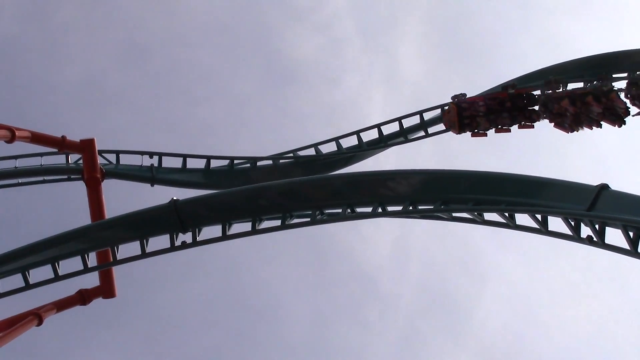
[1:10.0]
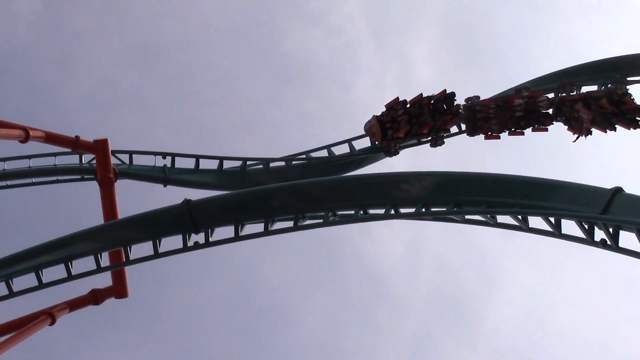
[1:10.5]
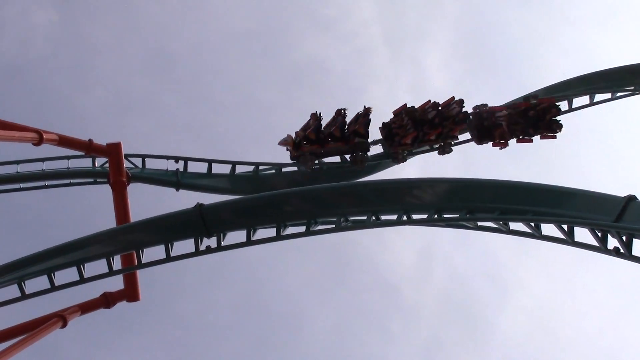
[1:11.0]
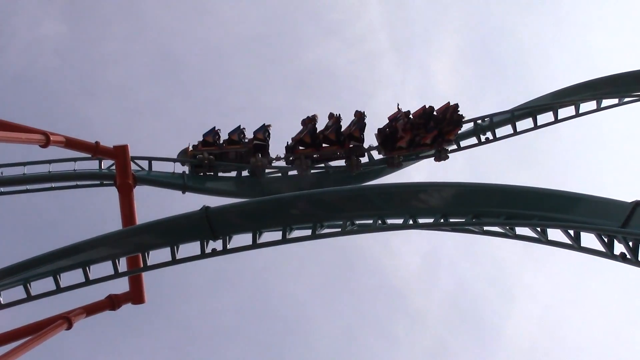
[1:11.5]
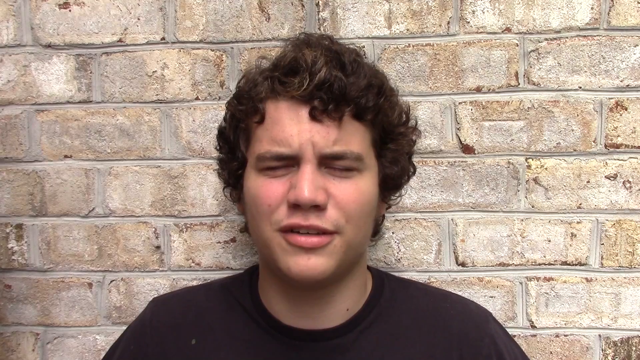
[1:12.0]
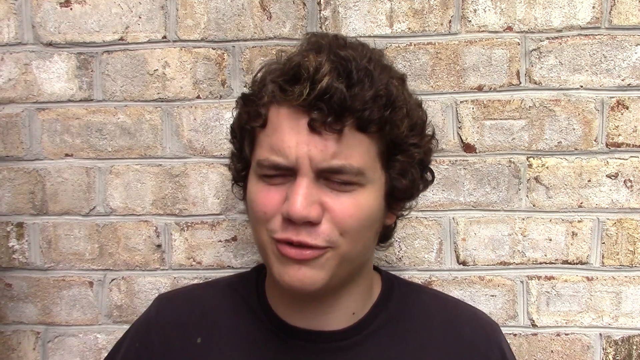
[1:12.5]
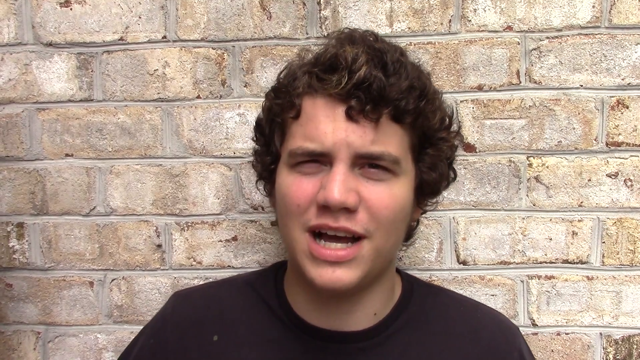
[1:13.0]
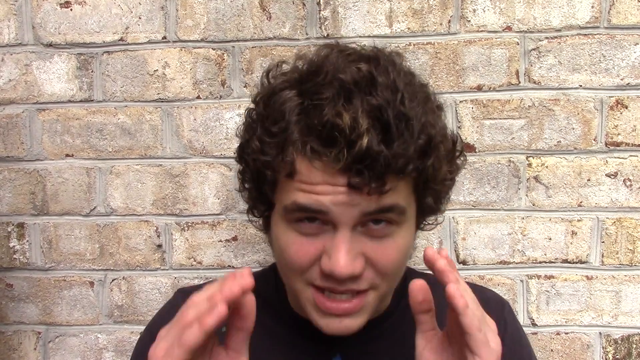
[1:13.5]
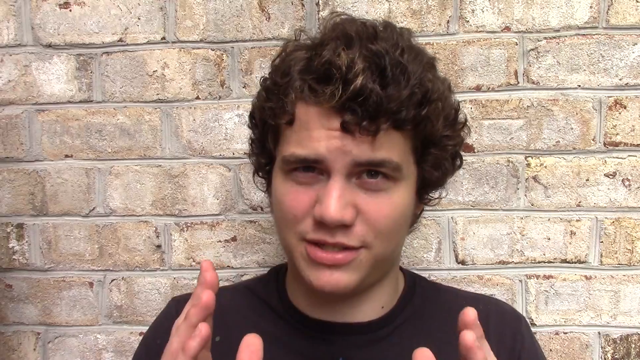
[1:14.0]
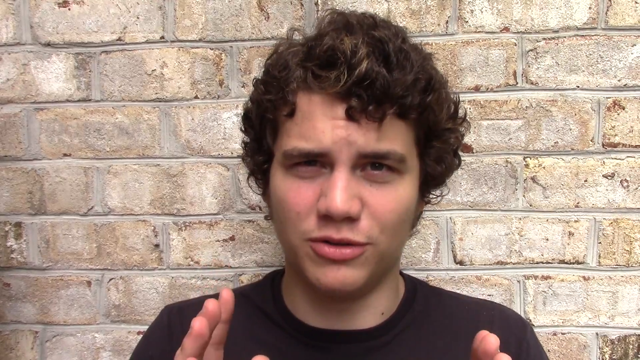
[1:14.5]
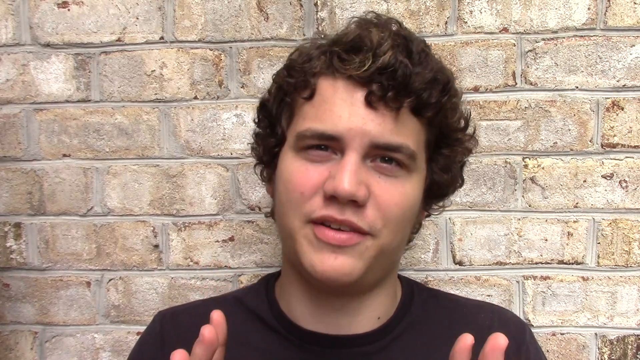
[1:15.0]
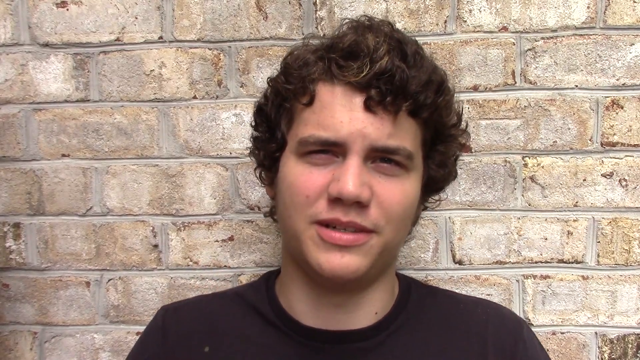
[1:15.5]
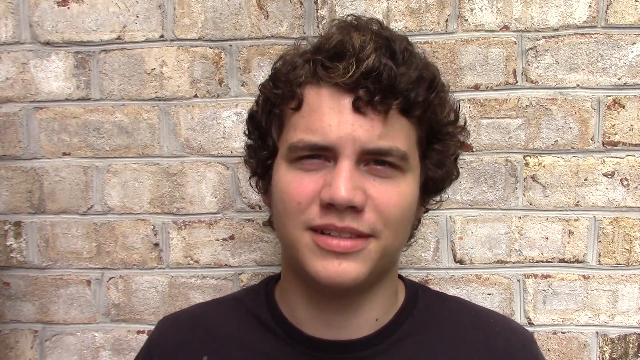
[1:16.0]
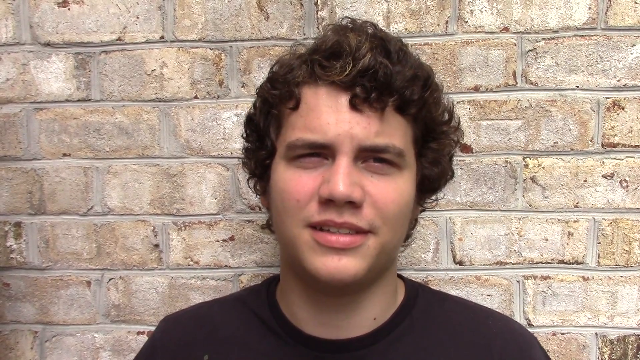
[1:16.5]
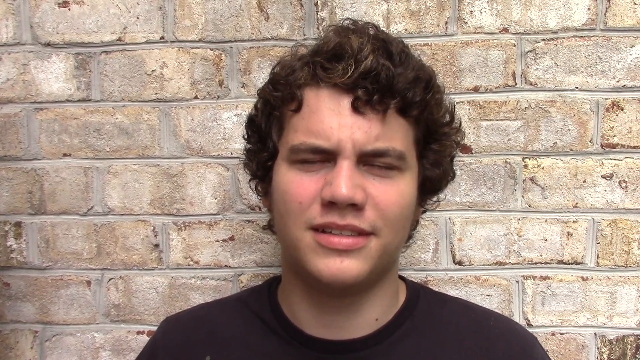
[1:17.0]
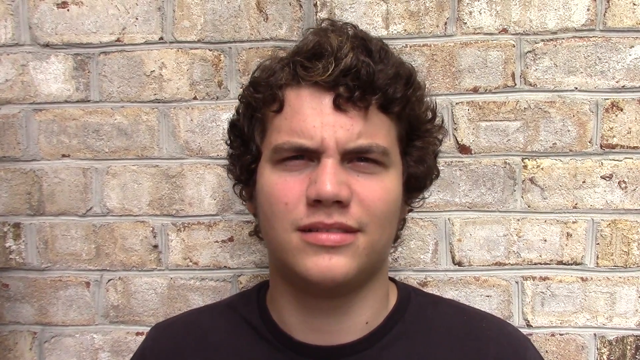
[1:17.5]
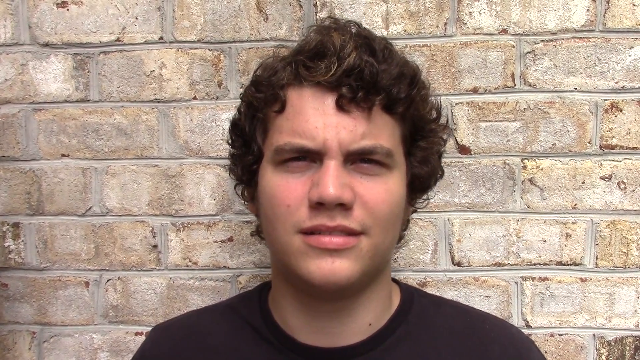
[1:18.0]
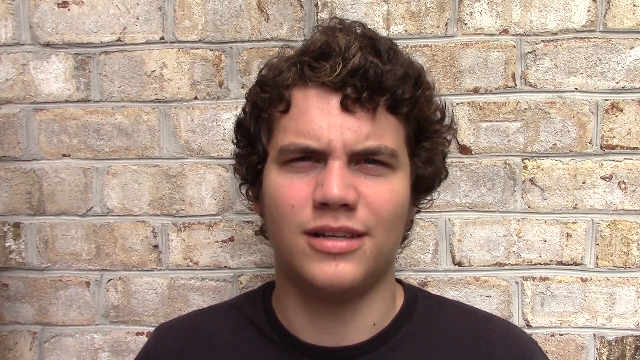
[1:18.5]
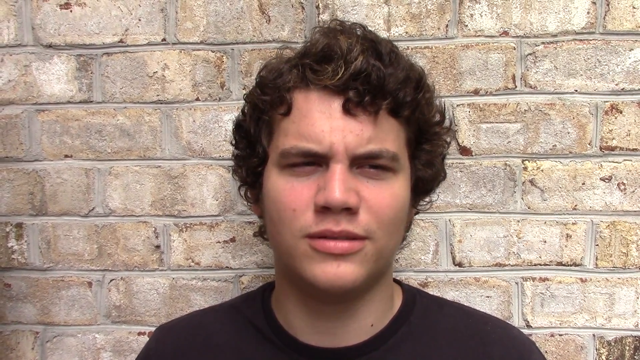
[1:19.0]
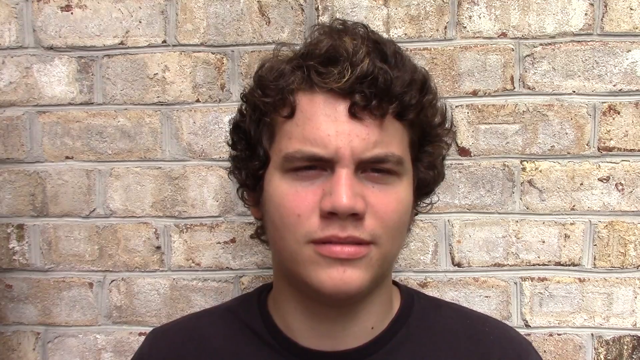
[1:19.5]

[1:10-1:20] The roller coaster proceeds along the twisting portion of the tracks with people inside. The tracks are painted dark green, and two sets of tracks are visible; the lower one is probably another part of the ride the coaster has not reached yet. The scene cuts to a younger man who looks Caucasian, with dark brown curly hair and a black t-shirt, standing in front of an off-colored beige brick wall with a faded, almost weathered pattern and patches of different colors. He is almost being interviewed, speaking to the camera and holding his hands up in front of his face as if explaining something. He then has a look of confusion, as if he was told something different from what he expected, and his lips seem to form the word "oh" as he looks off to his left, almost contemplating.